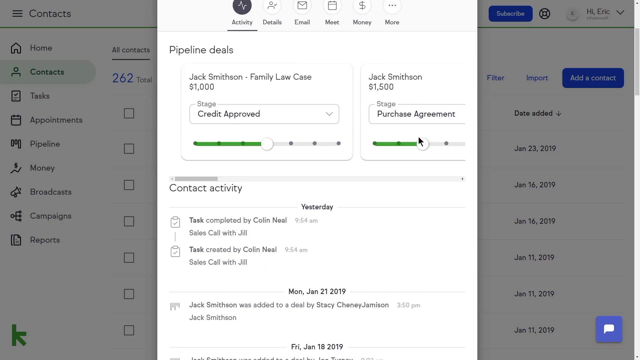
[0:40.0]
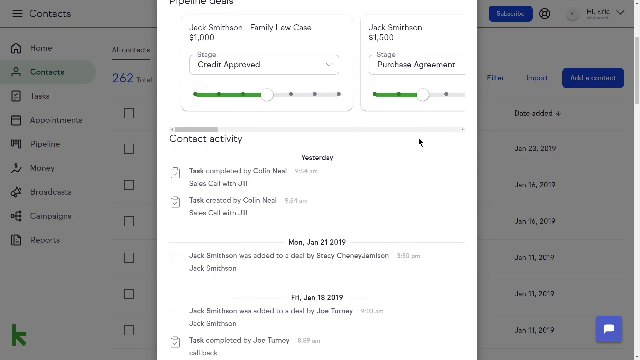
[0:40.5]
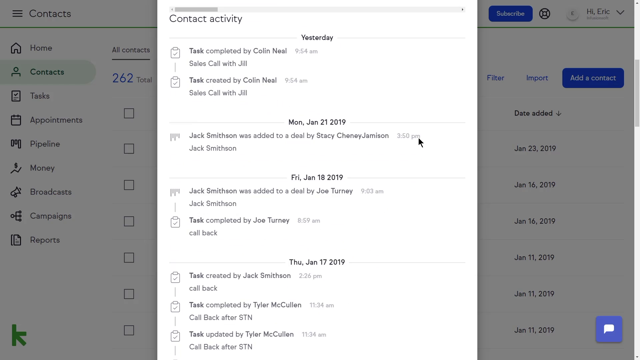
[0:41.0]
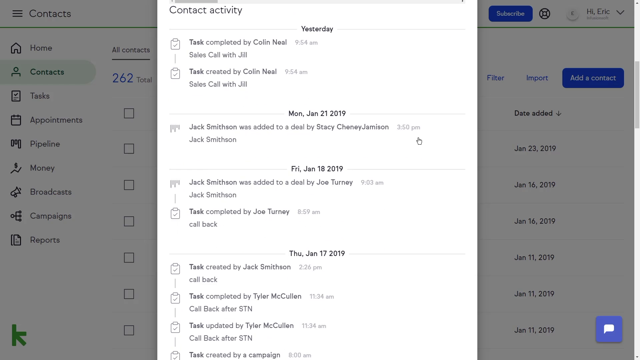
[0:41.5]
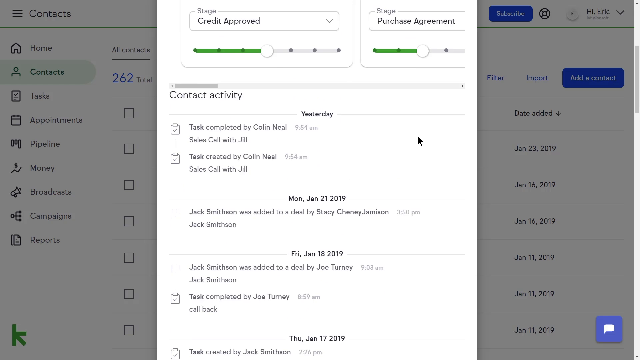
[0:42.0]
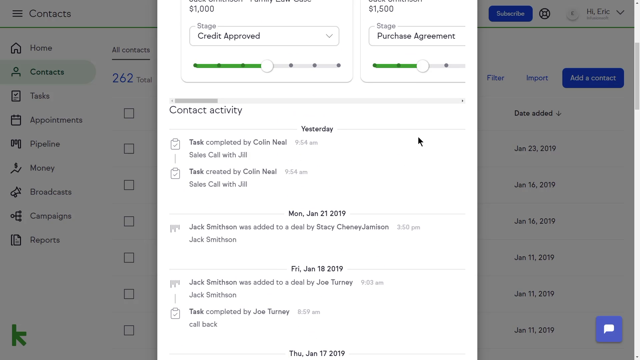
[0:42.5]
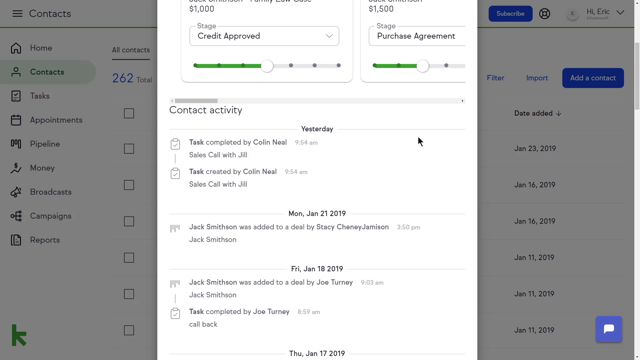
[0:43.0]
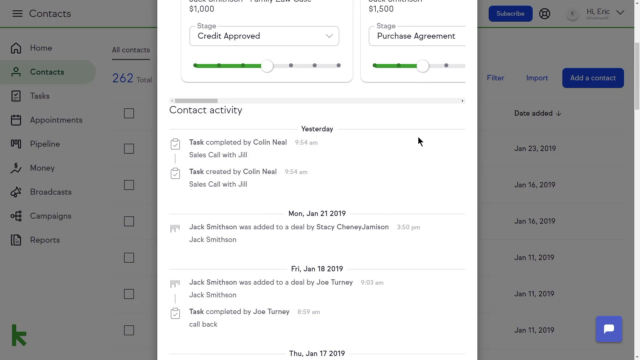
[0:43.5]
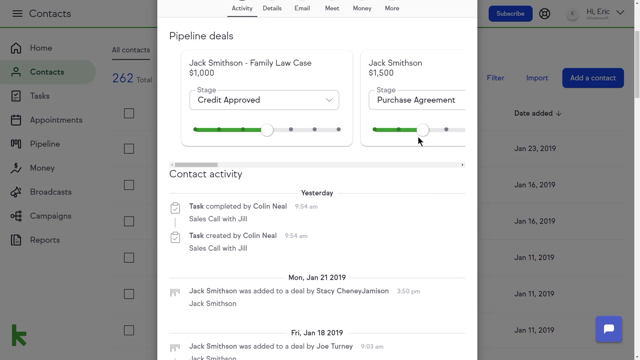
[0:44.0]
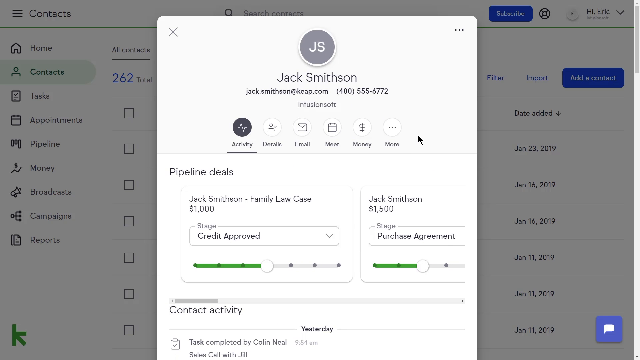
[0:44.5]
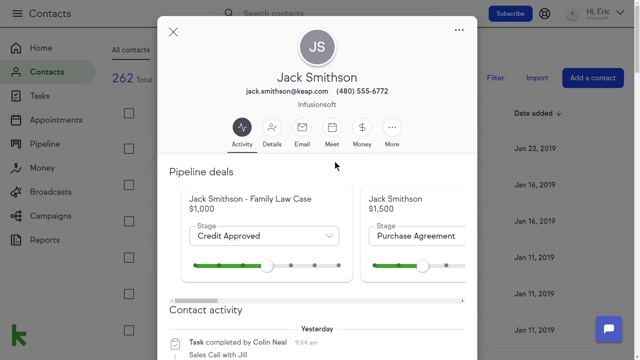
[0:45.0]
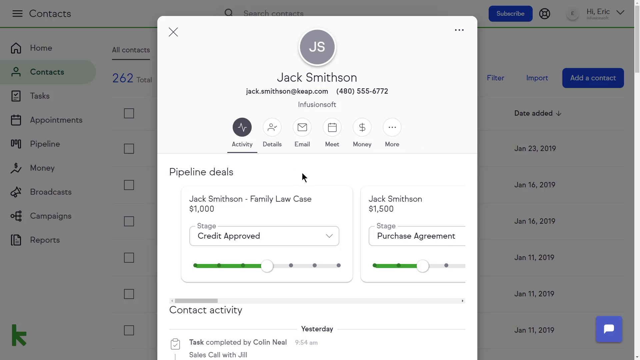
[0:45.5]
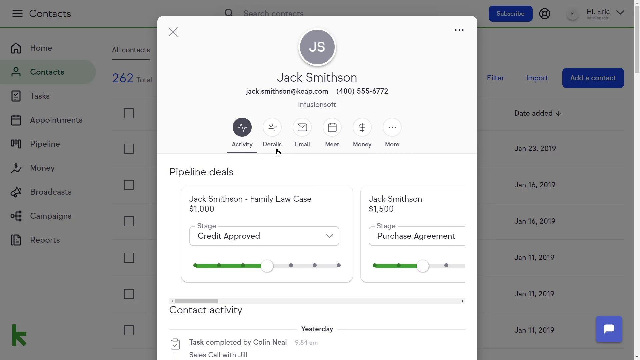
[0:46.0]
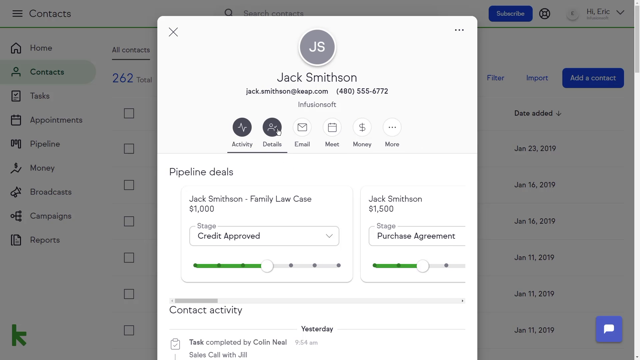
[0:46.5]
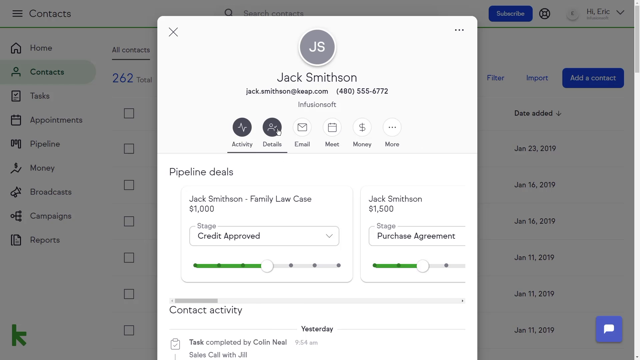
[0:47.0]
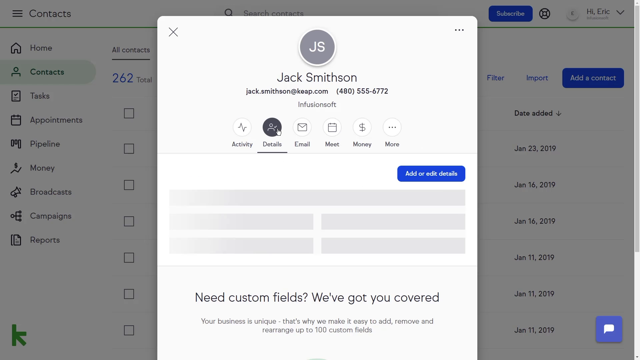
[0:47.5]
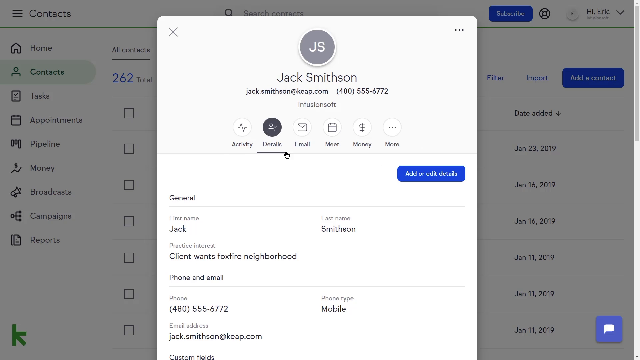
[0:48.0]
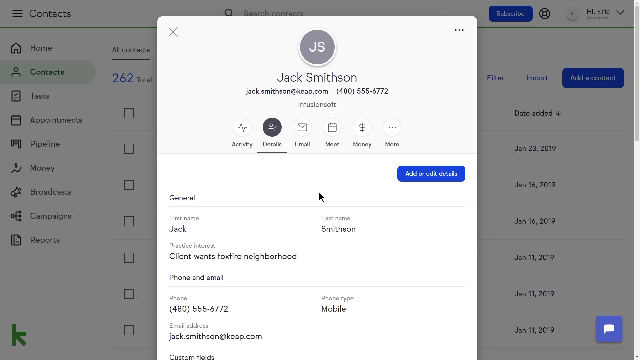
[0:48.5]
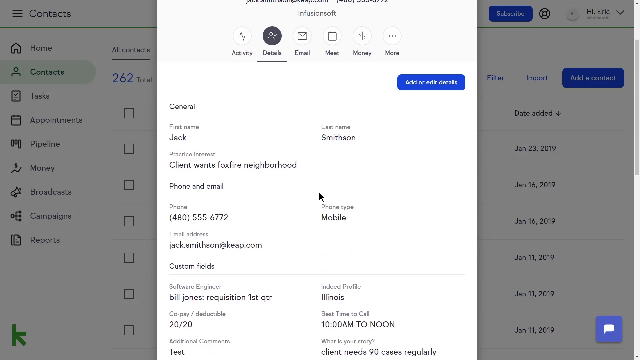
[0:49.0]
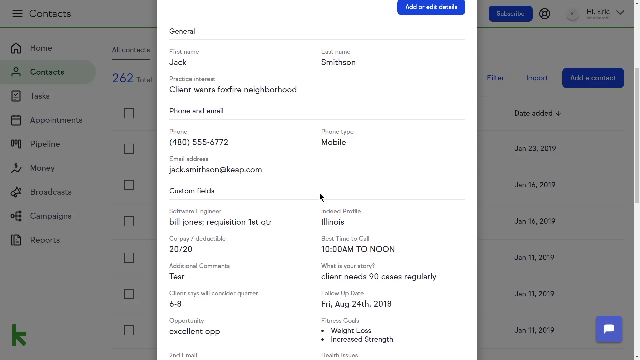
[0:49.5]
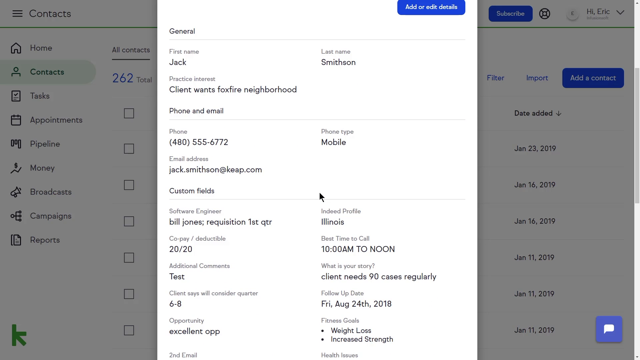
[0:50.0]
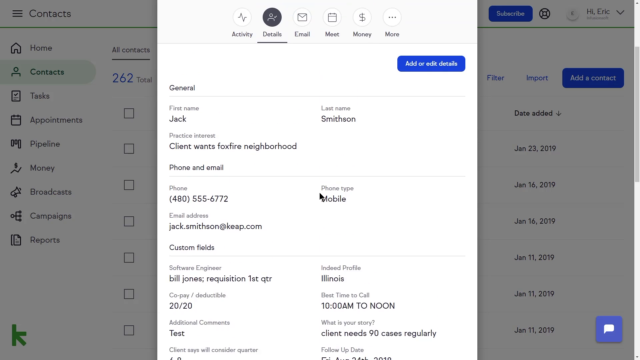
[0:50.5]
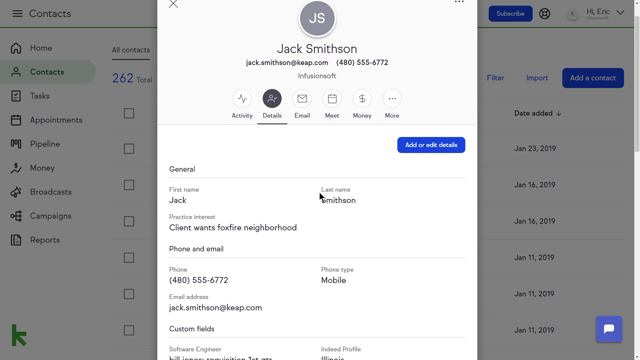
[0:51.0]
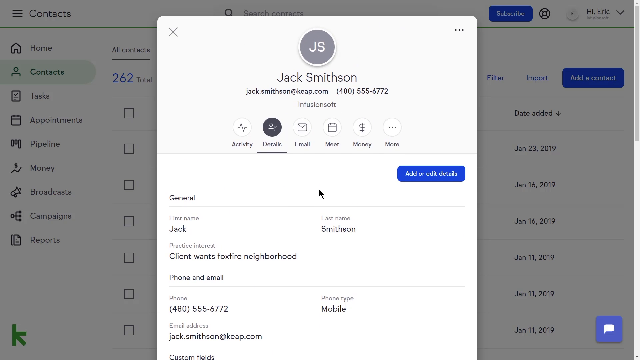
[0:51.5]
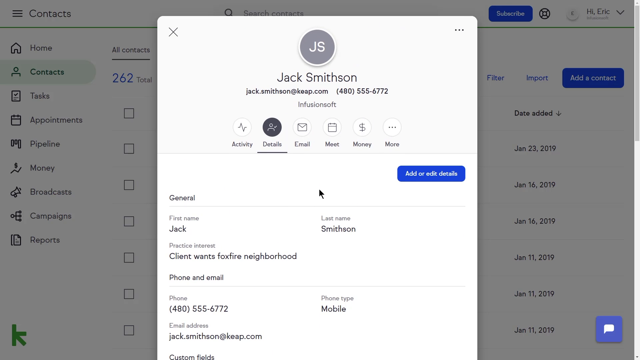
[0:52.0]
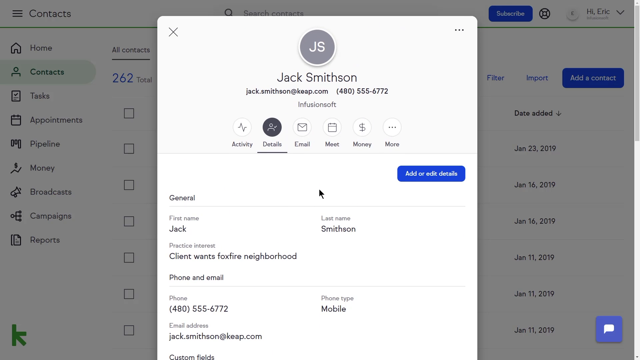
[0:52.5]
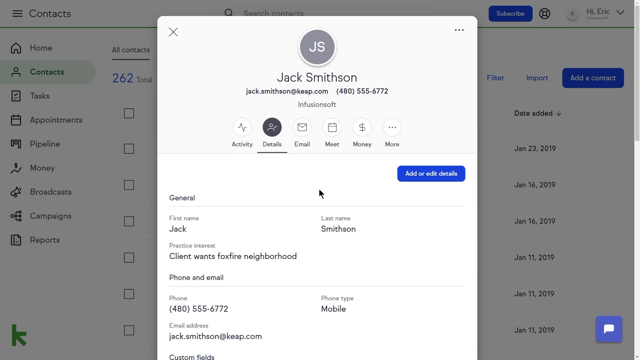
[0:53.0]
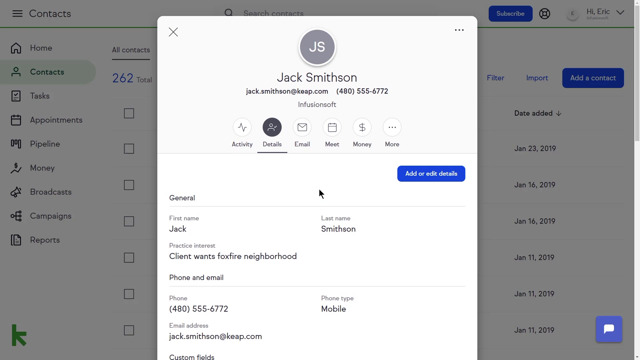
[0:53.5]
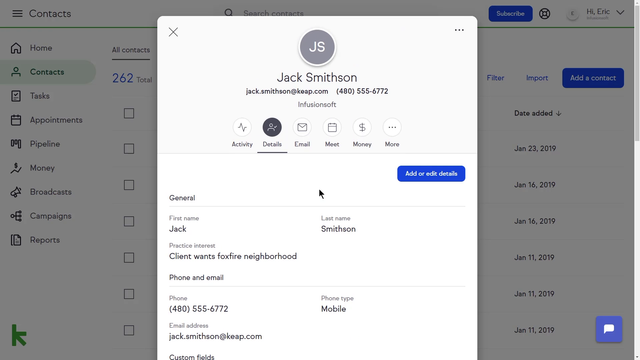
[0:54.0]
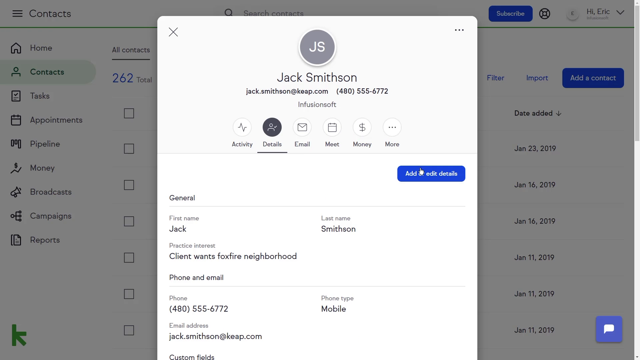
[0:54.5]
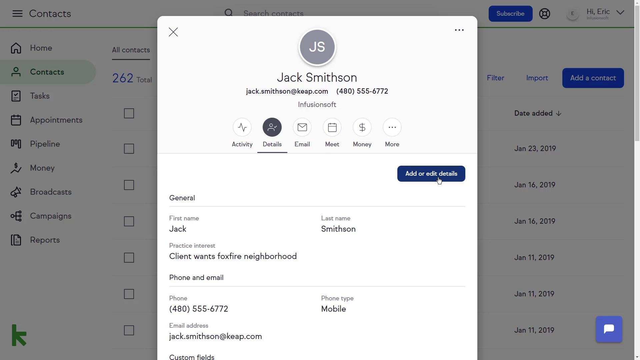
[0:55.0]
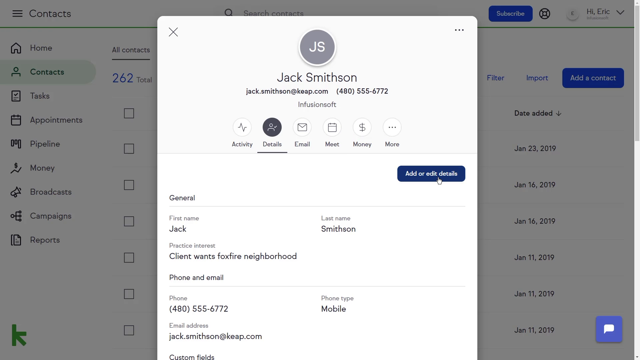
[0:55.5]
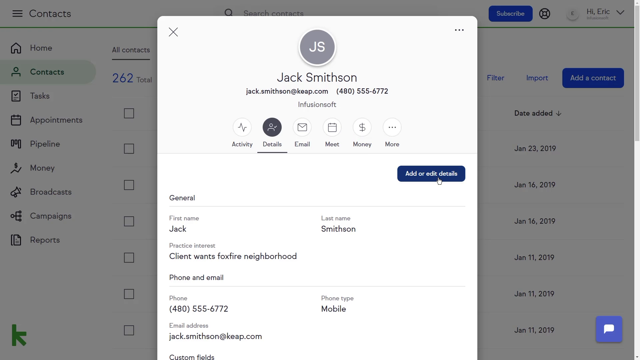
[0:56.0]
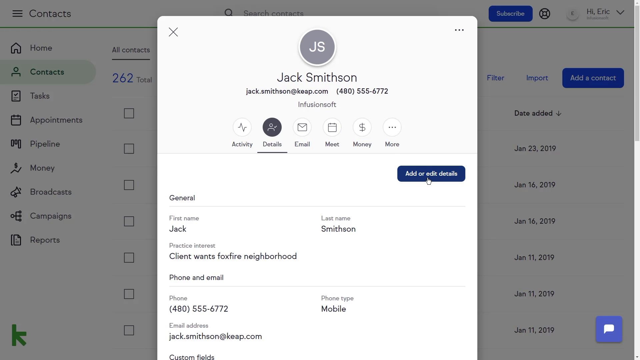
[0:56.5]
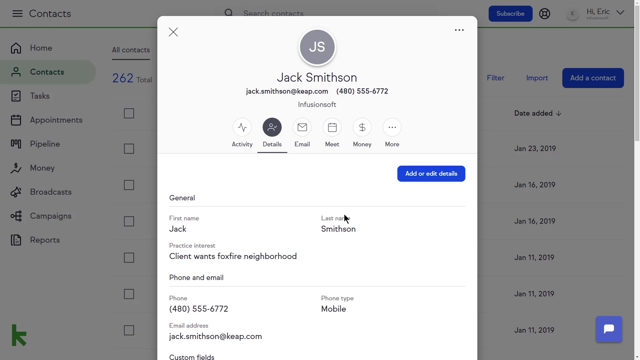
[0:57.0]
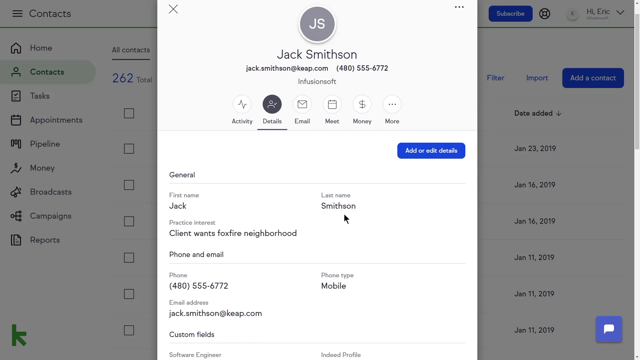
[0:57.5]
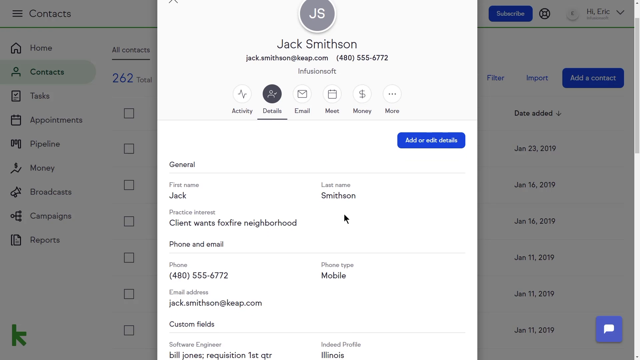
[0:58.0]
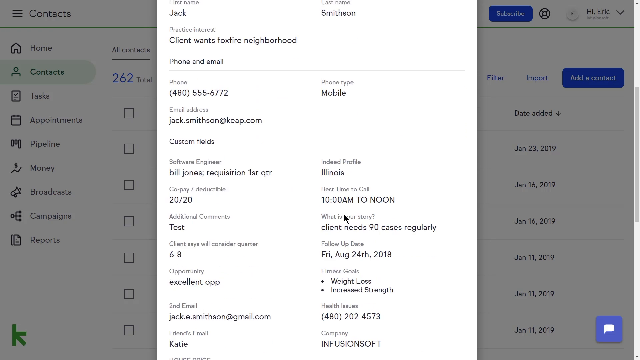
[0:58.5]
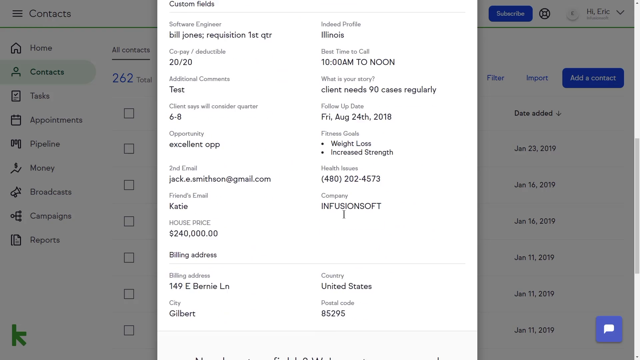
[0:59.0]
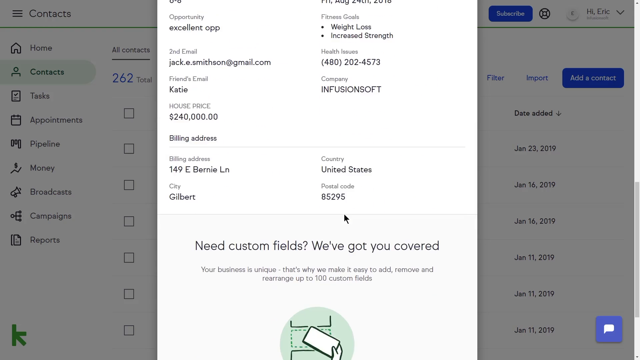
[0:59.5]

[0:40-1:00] The user interface of a leads program shows a specific contact opened, with the contact menu in the middle portion of the screen. The contact is Jack Smithson, with the email and phone number shown at the top of the page and action buttons next: activity, details, email, meet, money, and a more icon, followed by pipeline details and, last, contact activity. The user moves the mouse to the right-hand side of the interface and scrolls down to show the contact activity. The user scrolls back up toward the top of the page, clicks on the details category, and scrolls down to show the contact details, which include first and last name, practice interest, phone and email, and custom fields for the contact. The user then moves the mouse toward the right-hand side of the interface and clicks a rectangular blue button that reads "add or edit details".